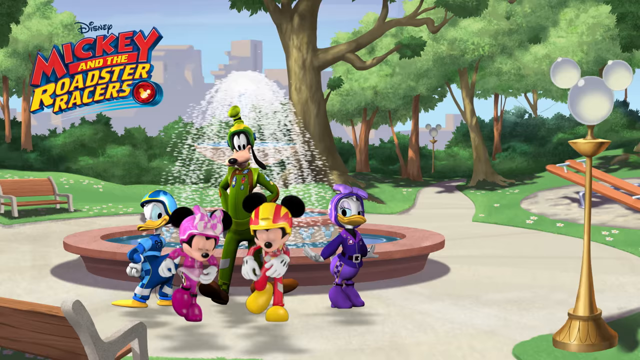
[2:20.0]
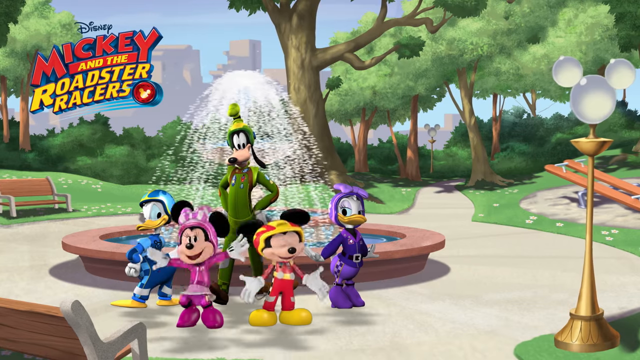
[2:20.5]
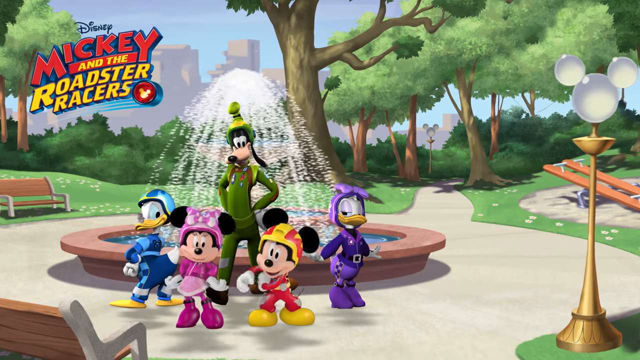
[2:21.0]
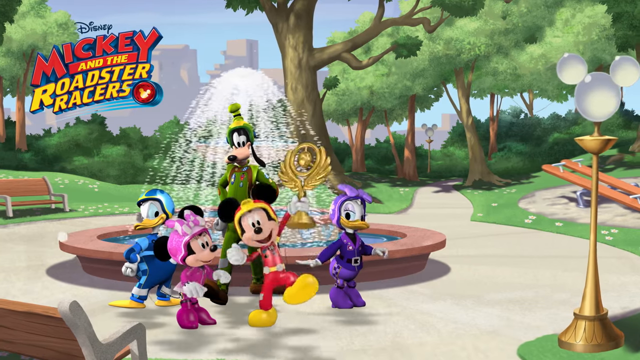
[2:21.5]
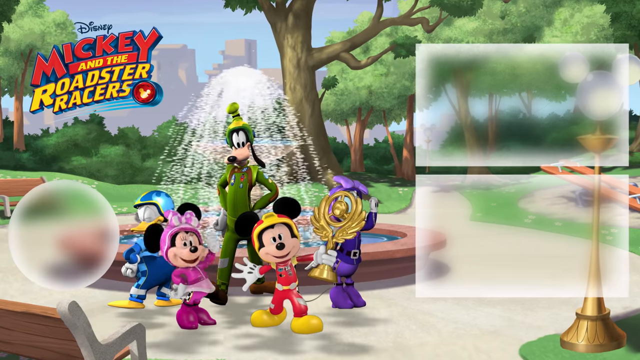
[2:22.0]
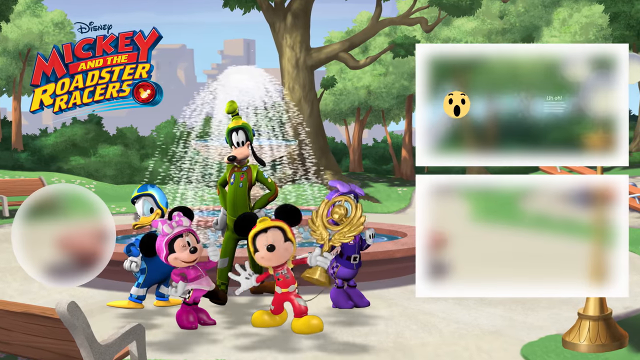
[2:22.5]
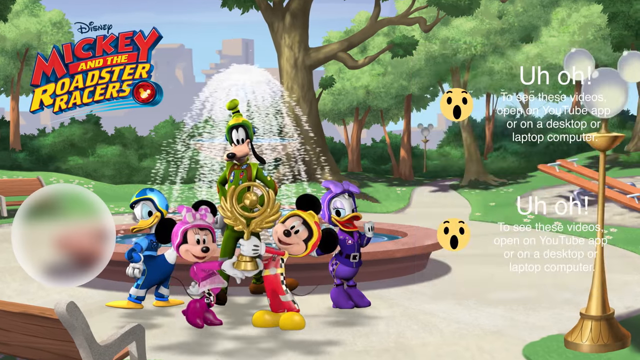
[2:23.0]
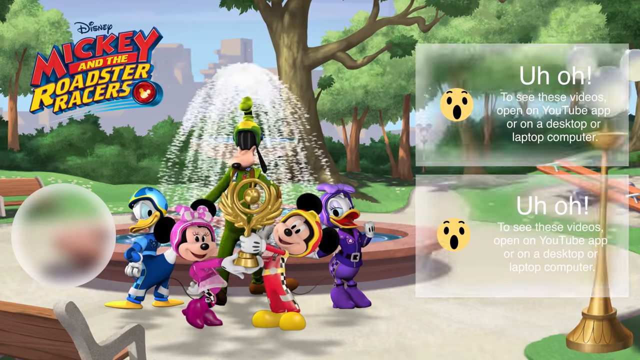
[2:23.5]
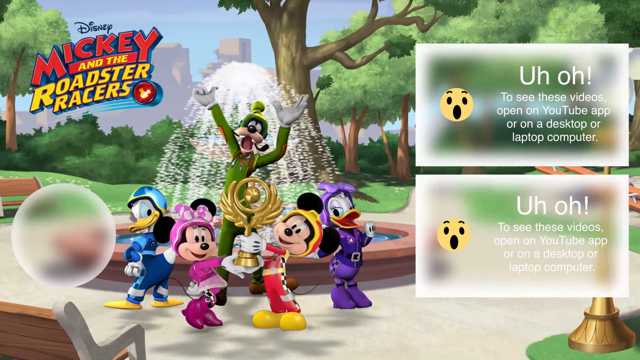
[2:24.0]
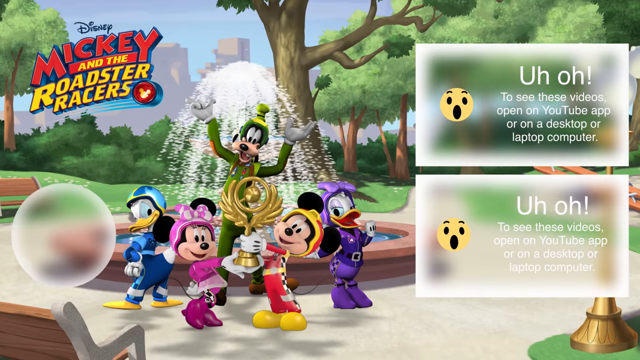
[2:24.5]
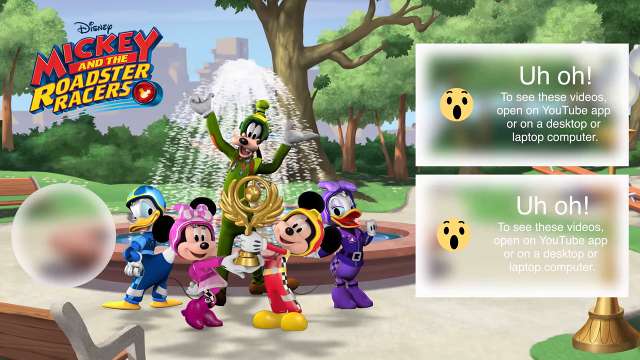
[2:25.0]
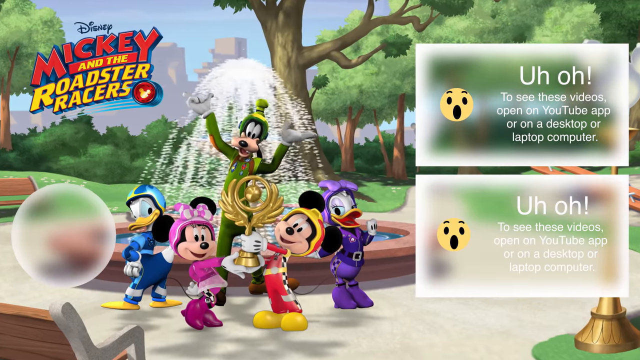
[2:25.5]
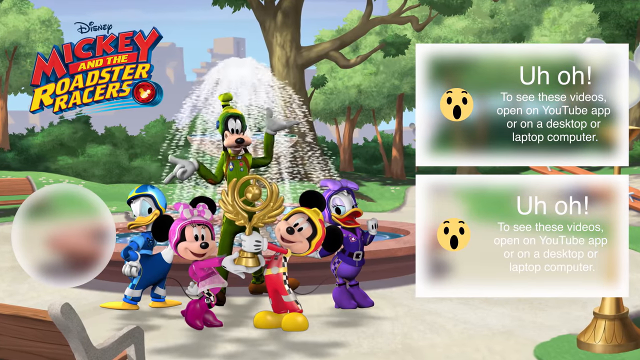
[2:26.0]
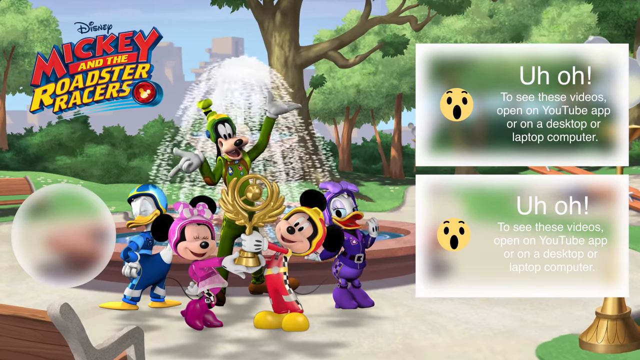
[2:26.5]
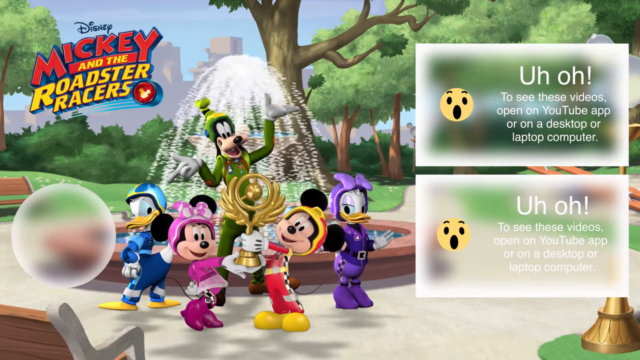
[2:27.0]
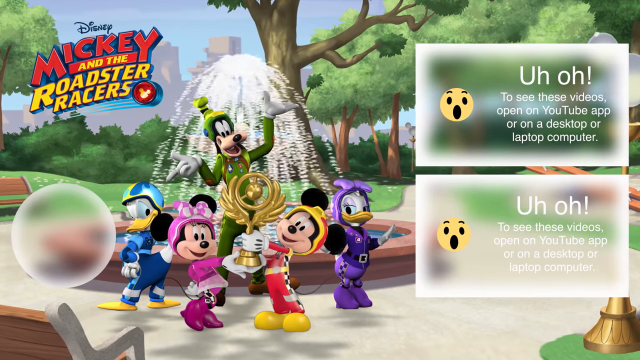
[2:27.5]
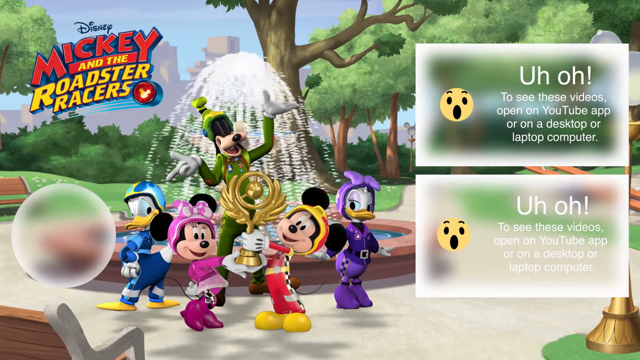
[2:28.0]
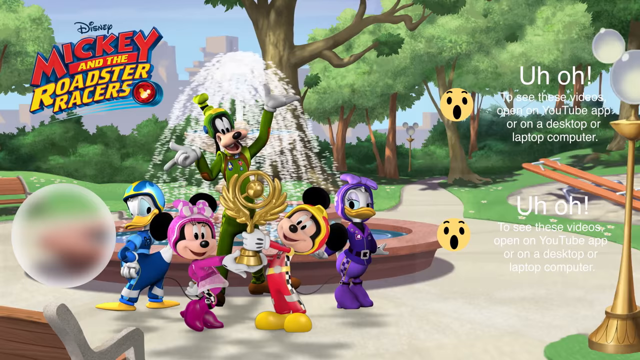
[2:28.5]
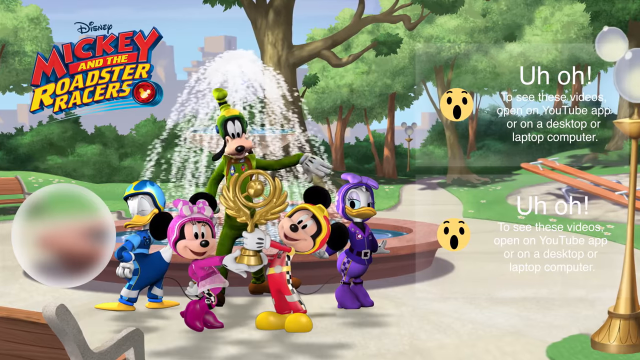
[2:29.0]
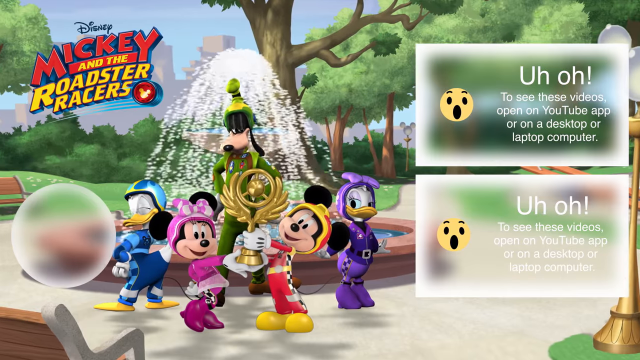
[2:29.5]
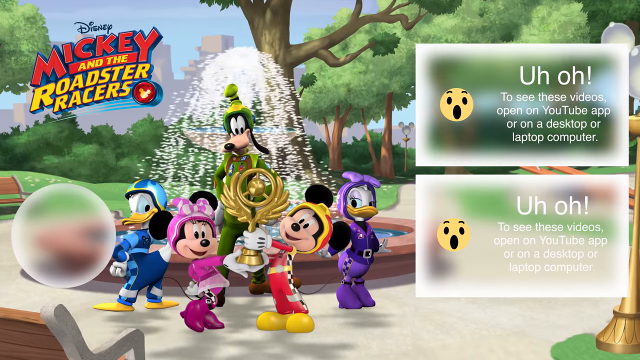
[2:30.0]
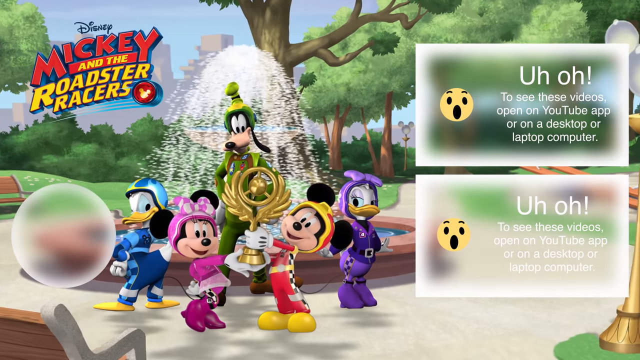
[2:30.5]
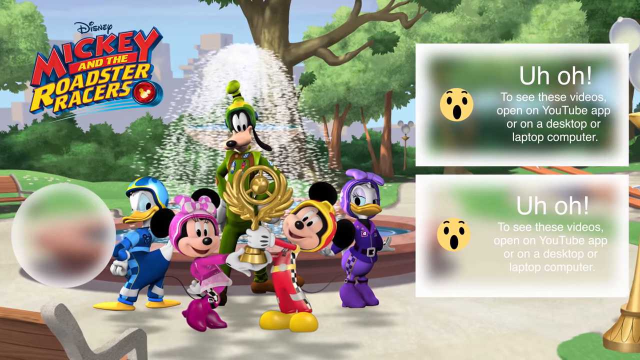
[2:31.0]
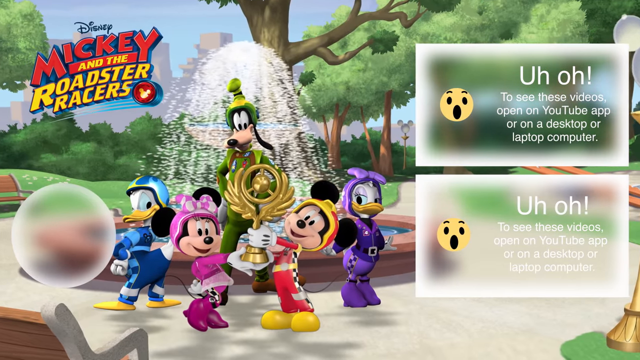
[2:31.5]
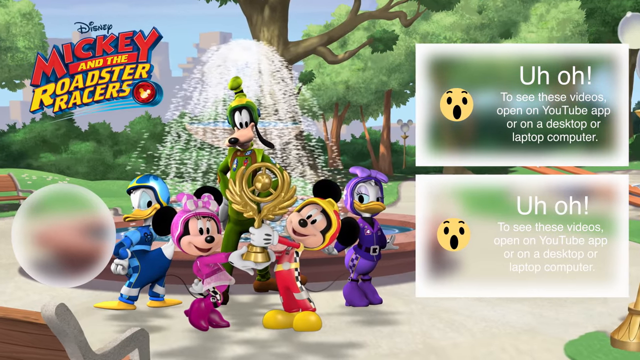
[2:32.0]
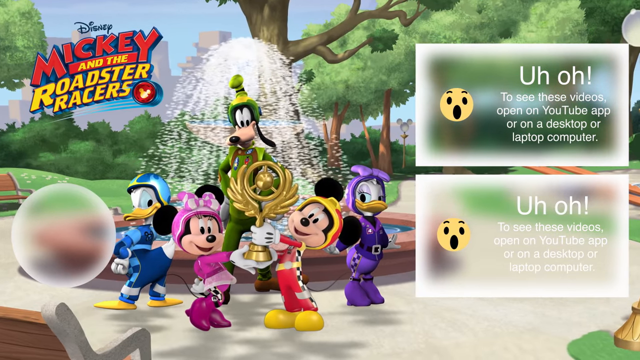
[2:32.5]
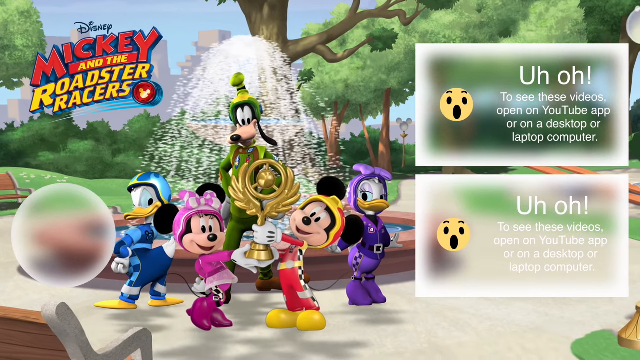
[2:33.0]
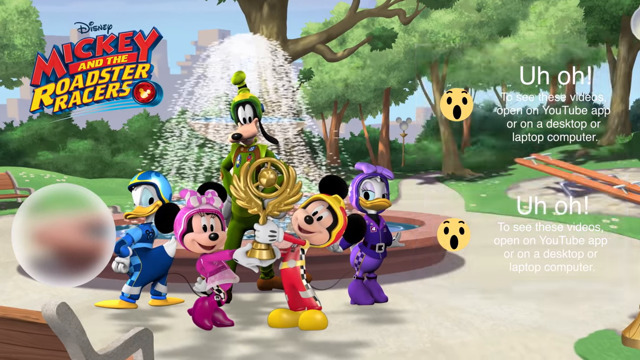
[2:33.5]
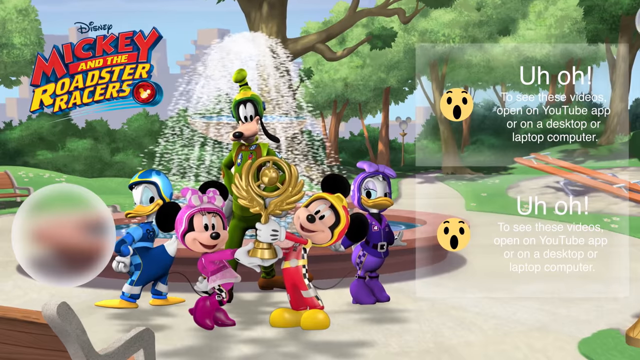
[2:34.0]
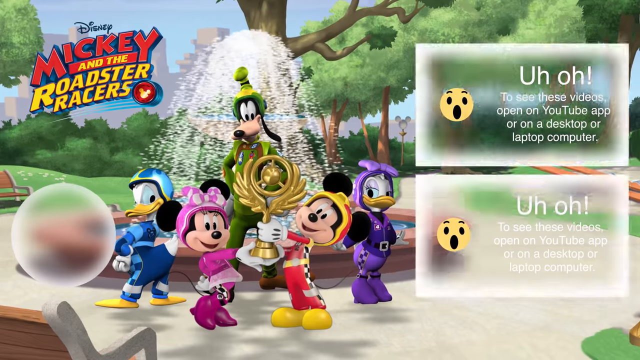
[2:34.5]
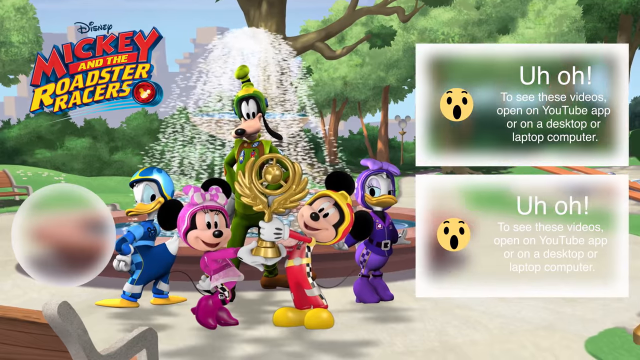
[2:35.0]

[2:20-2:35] A short, entirely new scene is set in a park with a fountain. In the top left corner is the logo "Mickey and the Roadster Racers". Five small characters are mostly on the left side of the screen in front of the fountain. From left to right: Donald in a blue racer's uniform, Minnie in a pink racer's uniform, a very tall green Goofy in a green racer's uniform, a mostly red Mickey with yellow highlights dancing in front of the fountain, and a purple Daisy, also in a racing uniform. Mickey holds a very large gold trophy with a large circular globe at the top in his right hand. He and Minnie dance together, kind of stomping their feet, and Mickey holds out the trophy in triumph. Mickey and Minnie then hold the trophy between them, directly in front of Goofy, who stands behind them closer to the fountain. Goofy raises his hands in triumph, and the screen seems to almost freeze, with all five characters holding still in that pose.